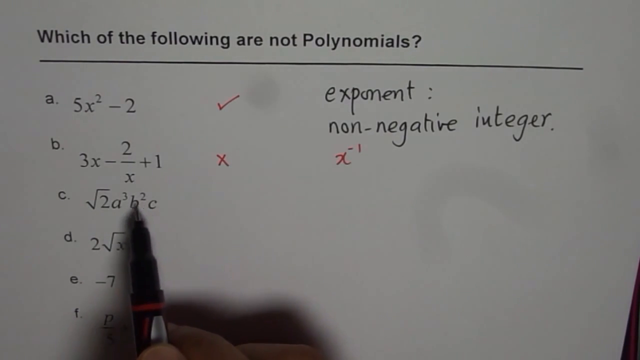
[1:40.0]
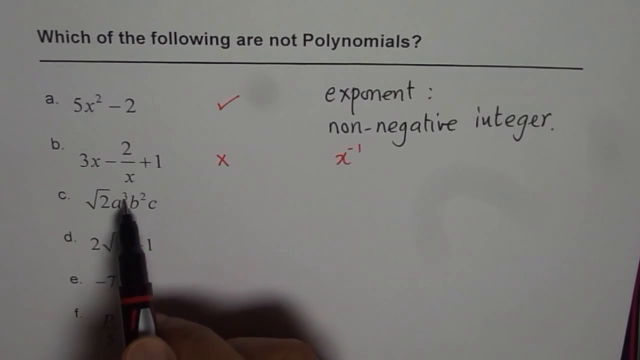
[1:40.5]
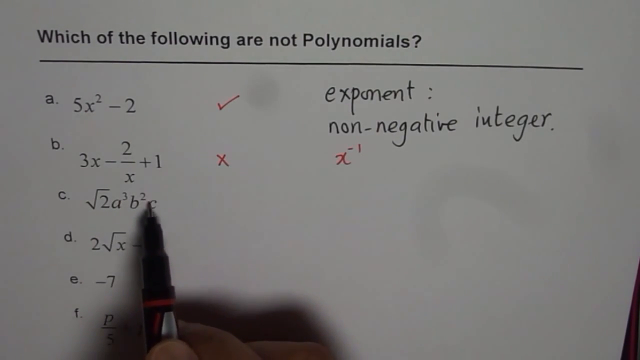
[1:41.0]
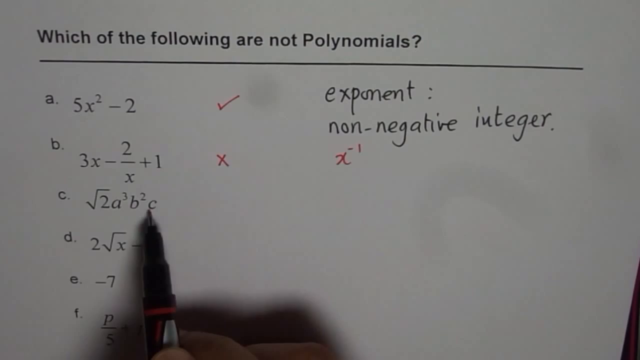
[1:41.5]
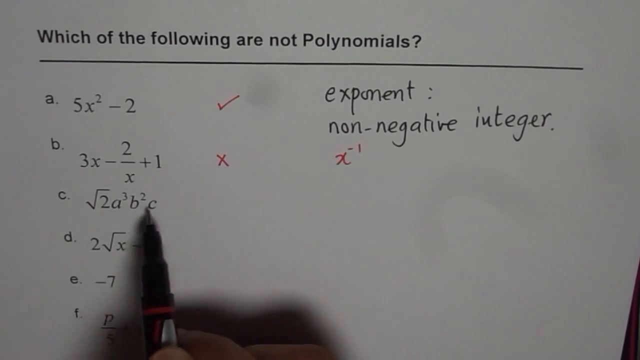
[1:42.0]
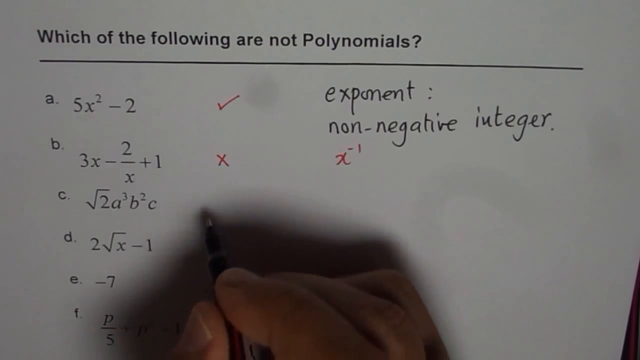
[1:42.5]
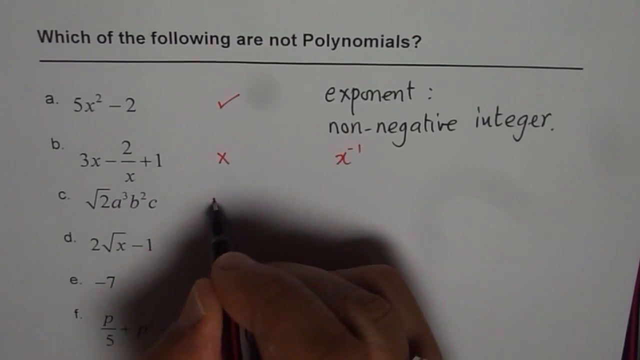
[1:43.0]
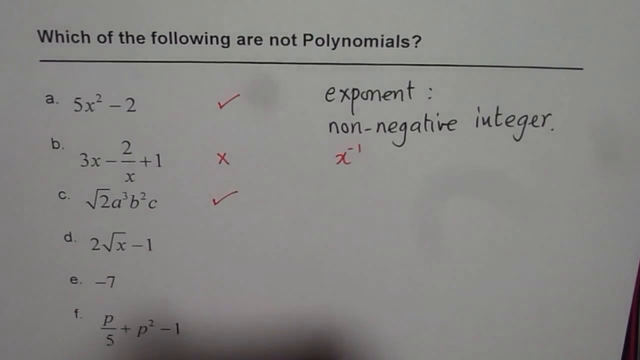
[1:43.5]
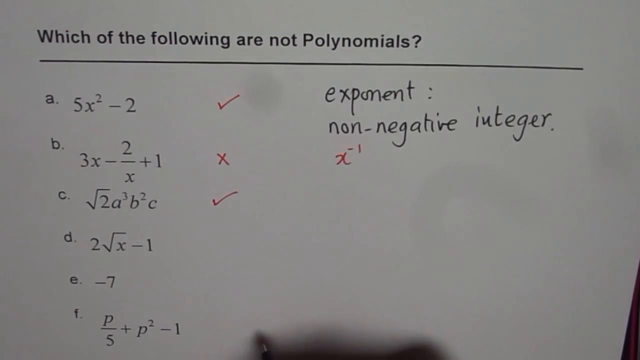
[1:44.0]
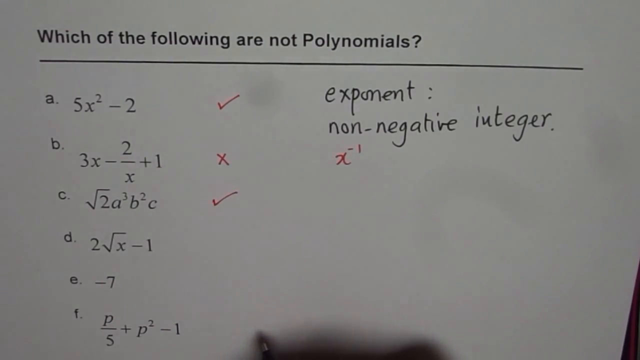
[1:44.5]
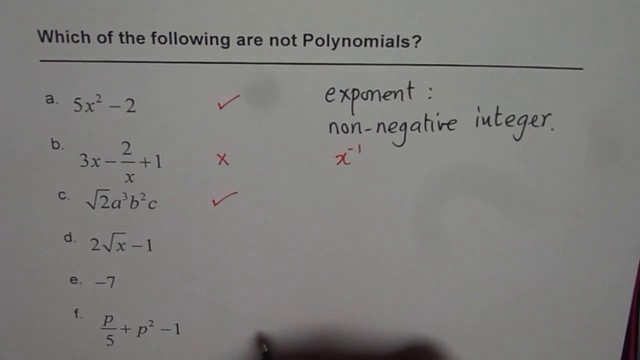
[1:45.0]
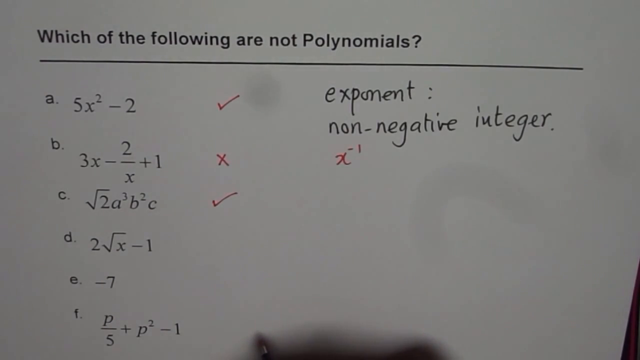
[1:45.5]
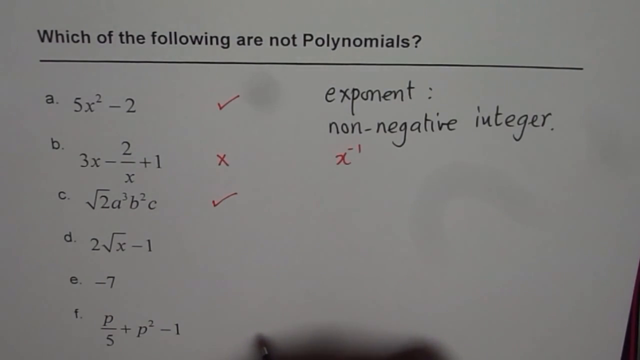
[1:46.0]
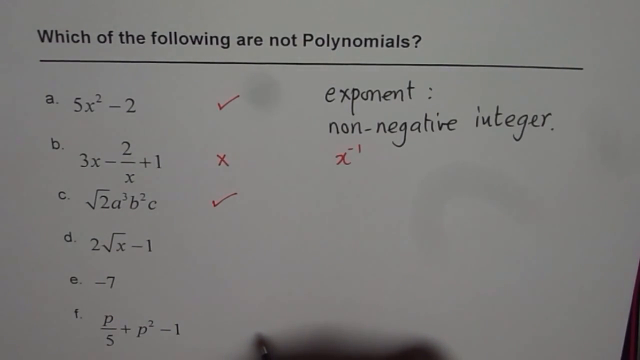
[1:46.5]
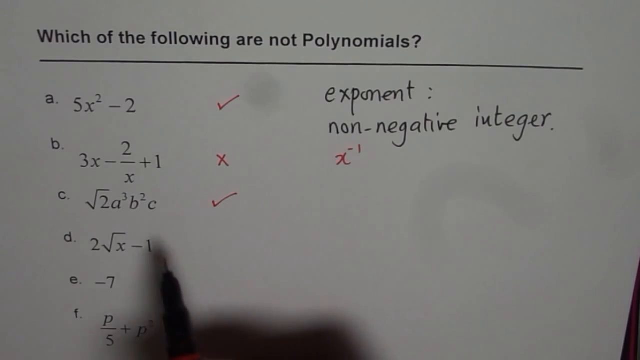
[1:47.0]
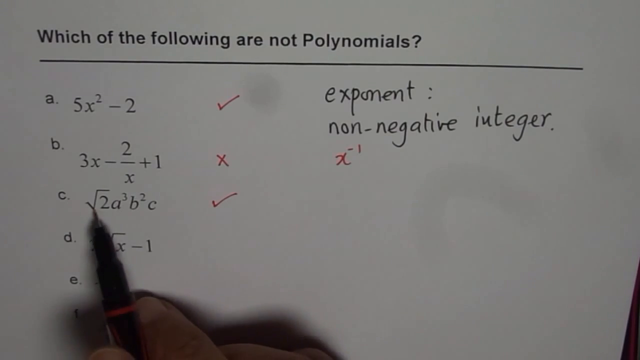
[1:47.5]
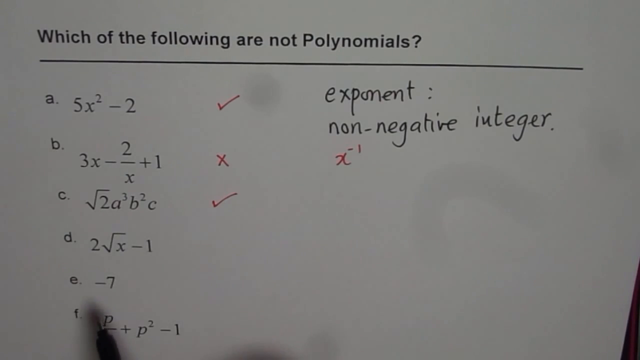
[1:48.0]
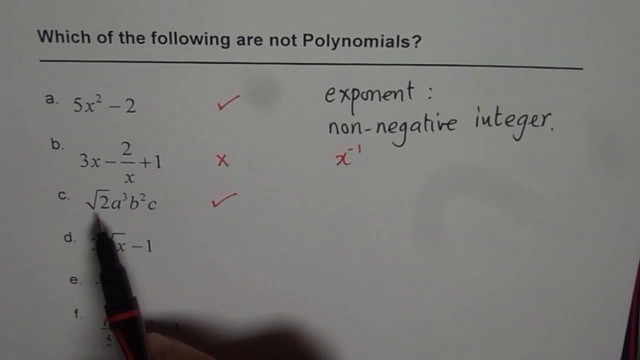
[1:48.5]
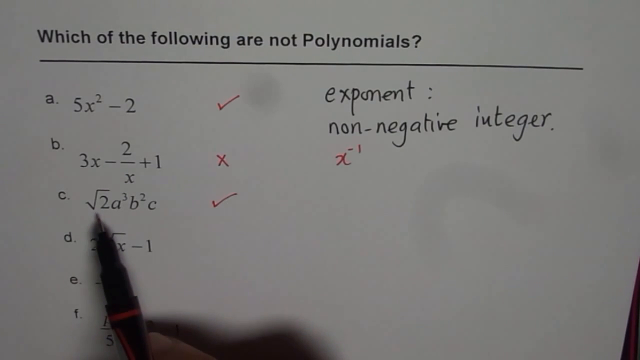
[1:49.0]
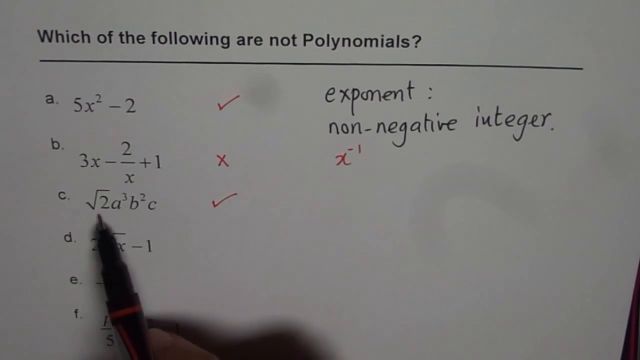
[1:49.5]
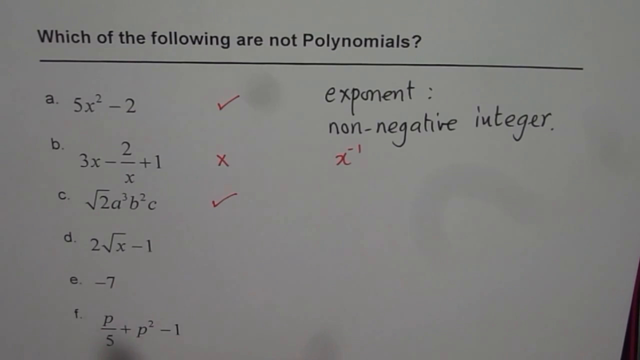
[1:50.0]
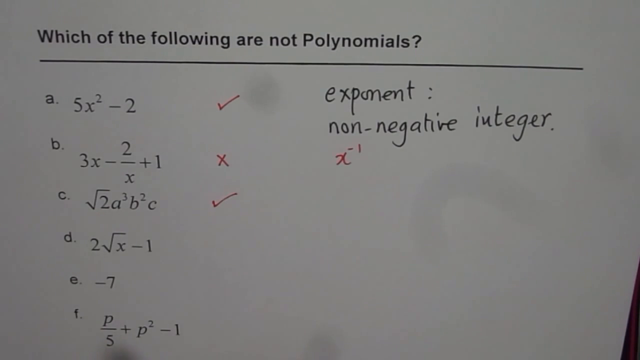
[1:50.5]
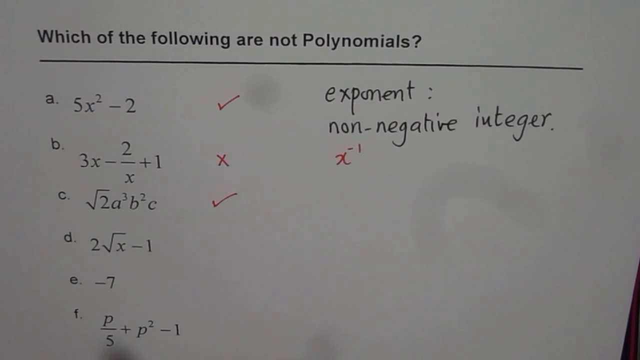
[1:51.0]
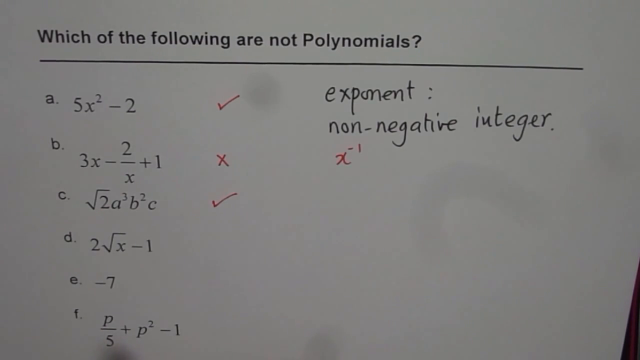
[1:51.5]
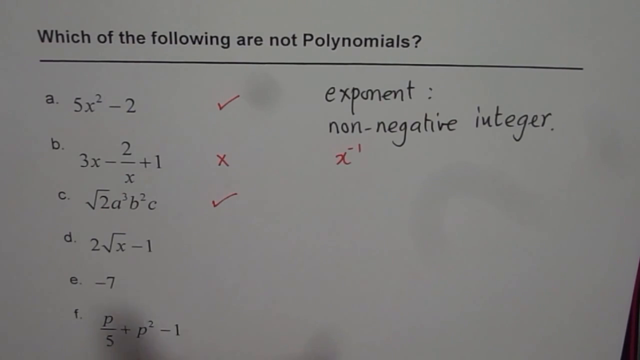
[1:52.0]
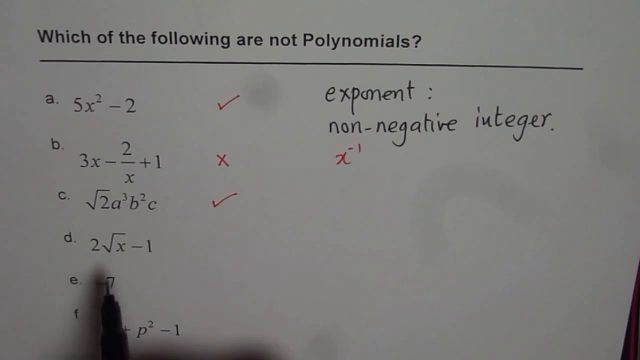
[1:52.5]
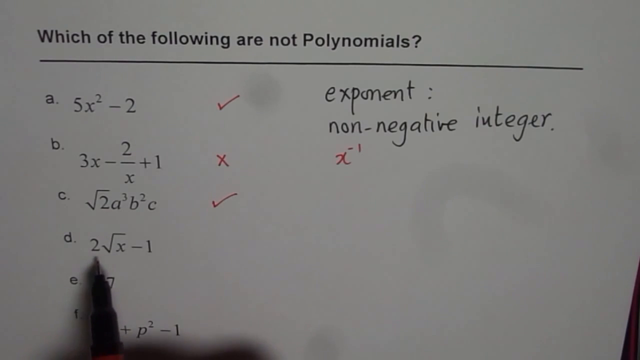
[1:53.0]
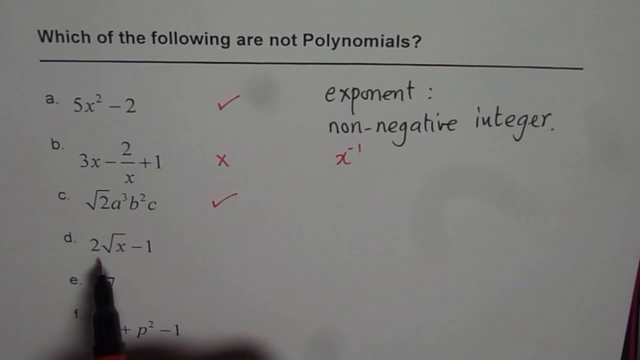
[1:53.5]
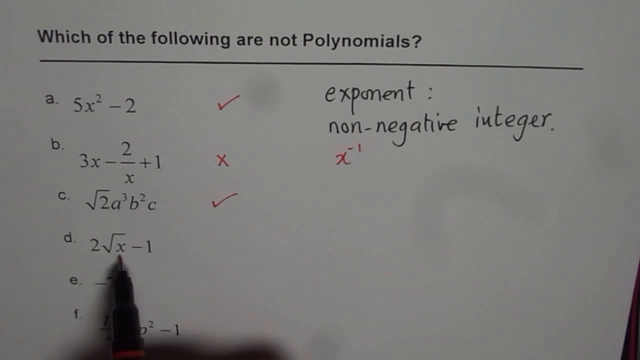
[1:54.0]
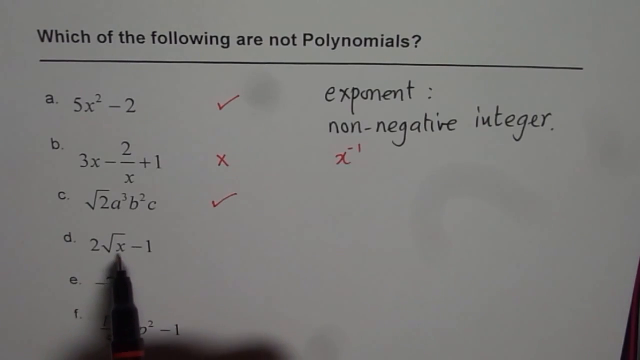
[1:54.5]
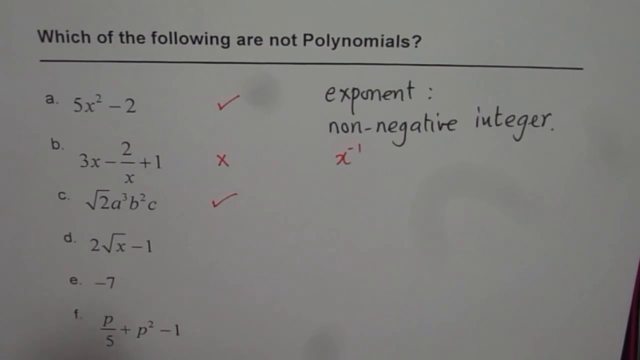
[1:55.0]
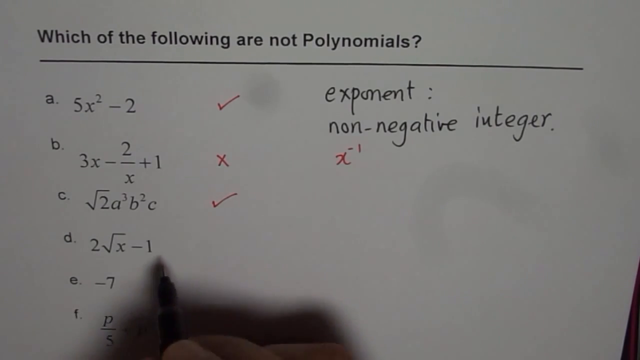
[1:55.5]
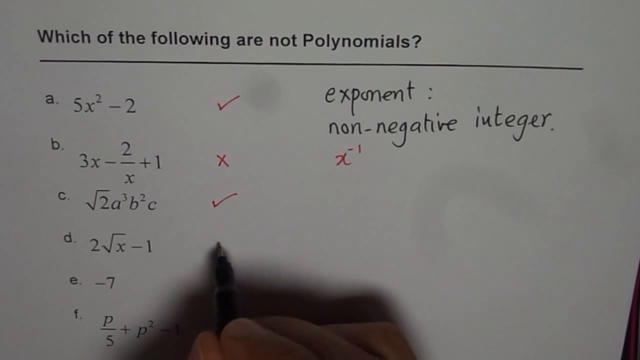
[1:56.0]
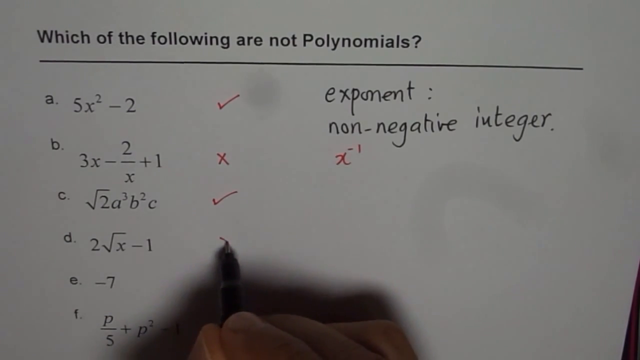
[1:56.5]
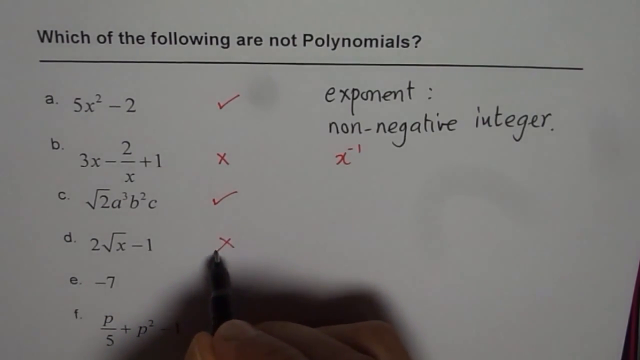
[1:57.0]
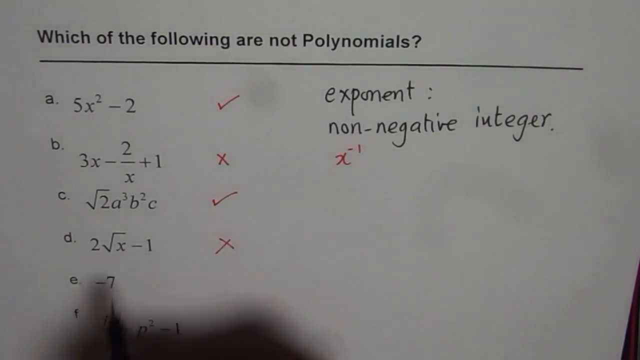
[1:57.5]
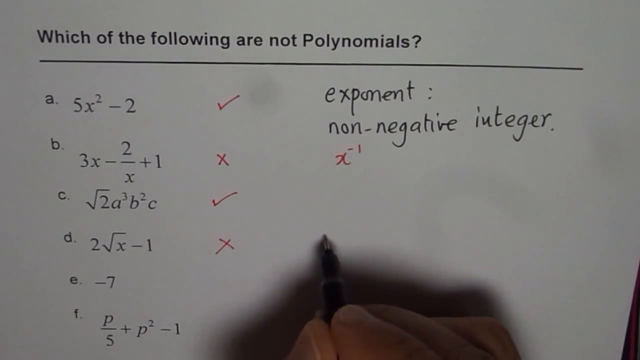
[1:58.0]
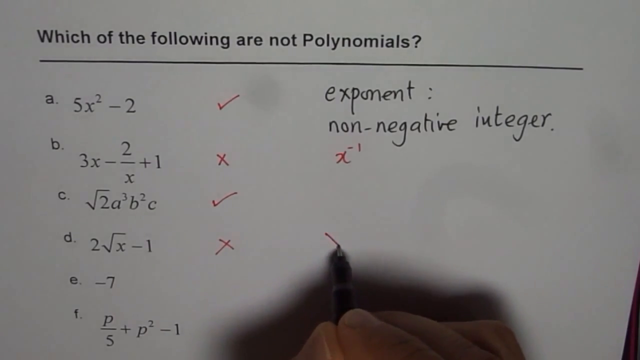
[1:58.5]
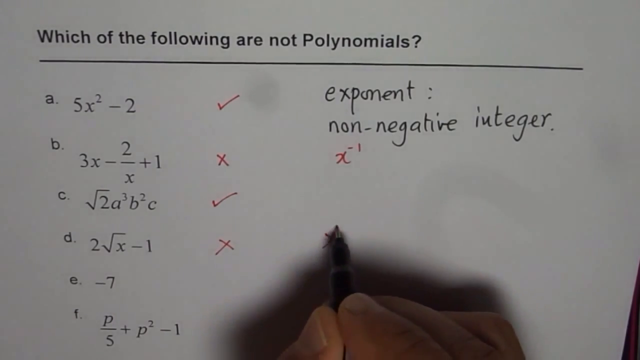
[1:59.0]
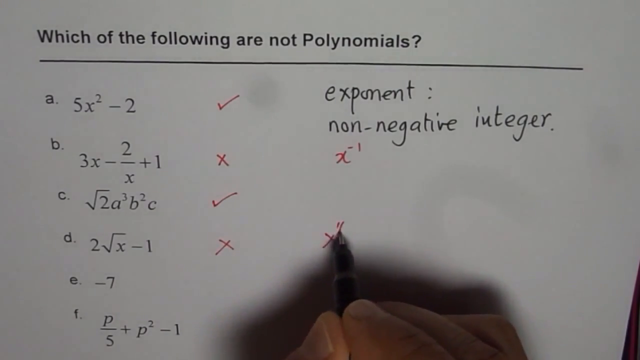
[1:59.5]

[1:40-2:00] The fingers have slipped back a little, revealing that the pen's casing near the tip is black. It has only a very small grip, the tip is pointed, and behind the black part the pen is red with a little silver across its top, making it a different pen from before. This pen points at C and puts a red check mark beside it; C is the square root of 2a to the 3rd power b to the 2nd power c. The pen kind of taps on C, then points at D, goes off the screen, and comes back to D. D is 2 square root of x minus 1, and a red X is placed to the right of it. Then, where the x with the negative 1 power was written, an x with a power of one half is written.